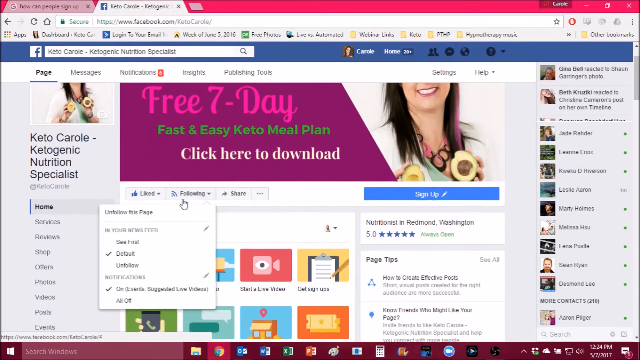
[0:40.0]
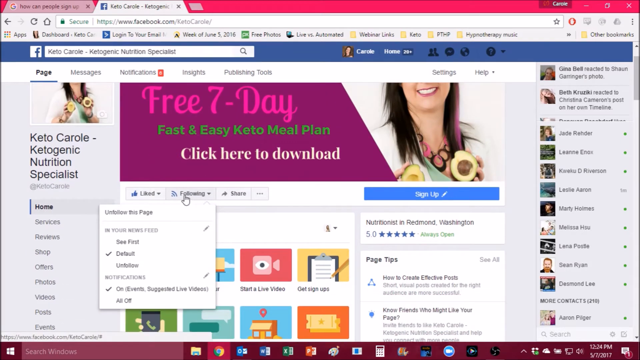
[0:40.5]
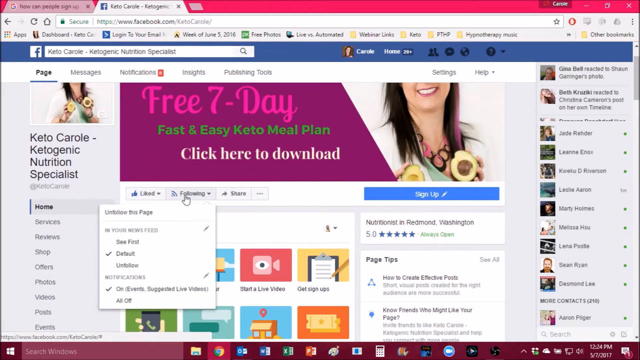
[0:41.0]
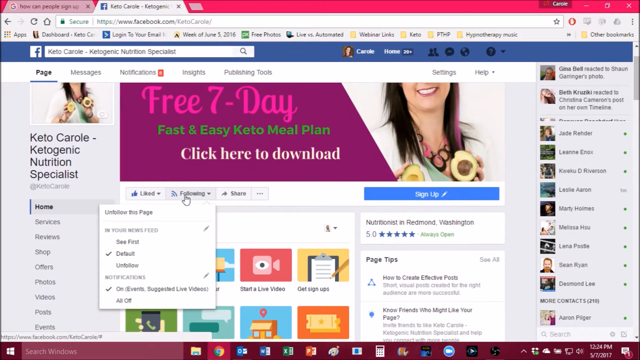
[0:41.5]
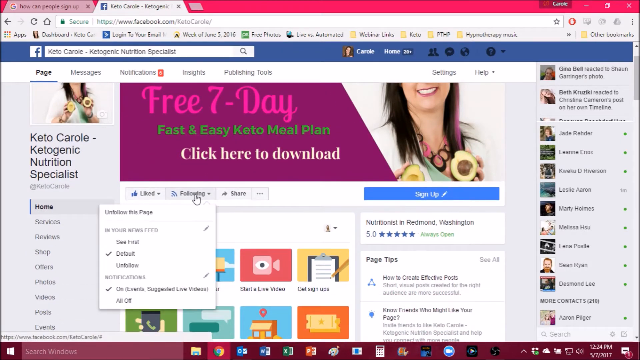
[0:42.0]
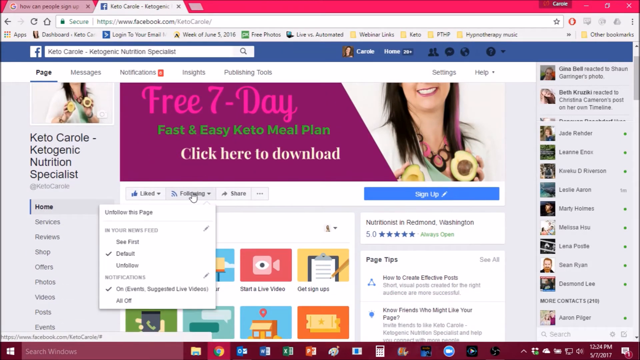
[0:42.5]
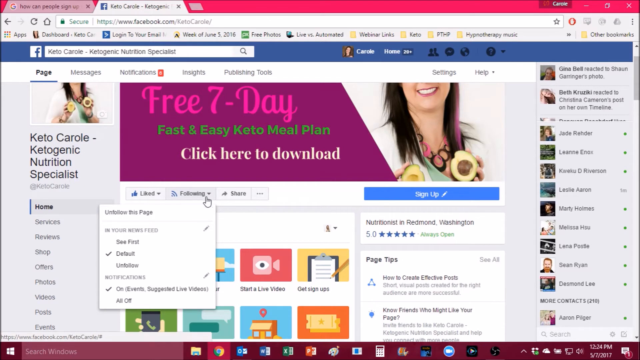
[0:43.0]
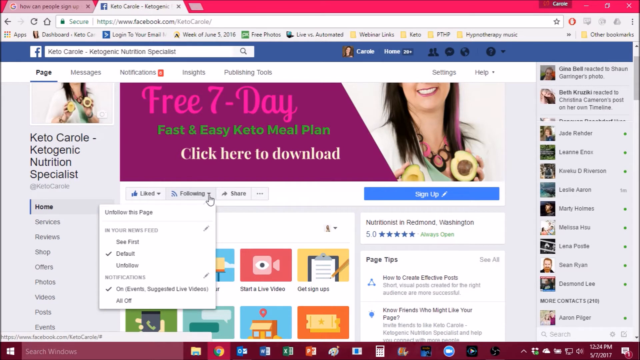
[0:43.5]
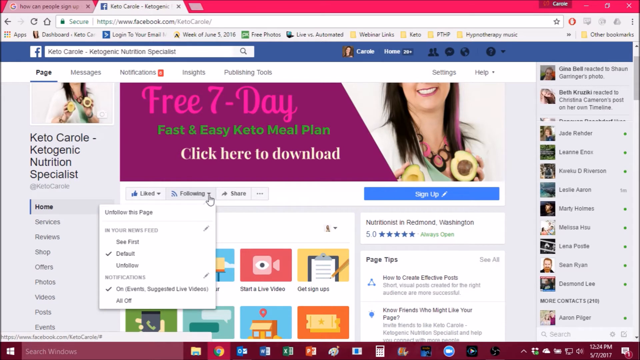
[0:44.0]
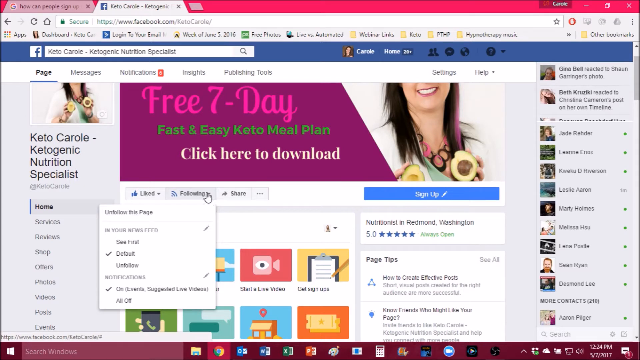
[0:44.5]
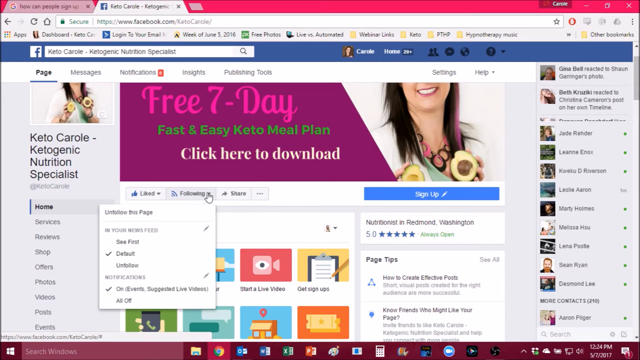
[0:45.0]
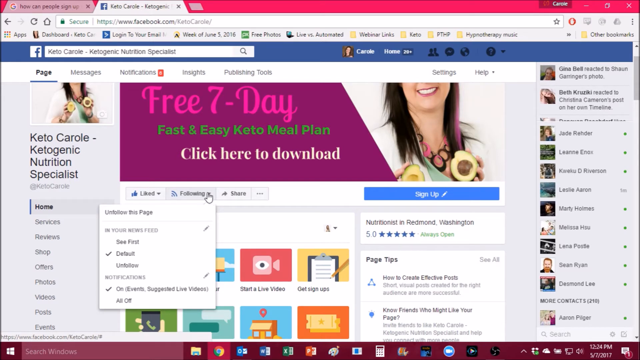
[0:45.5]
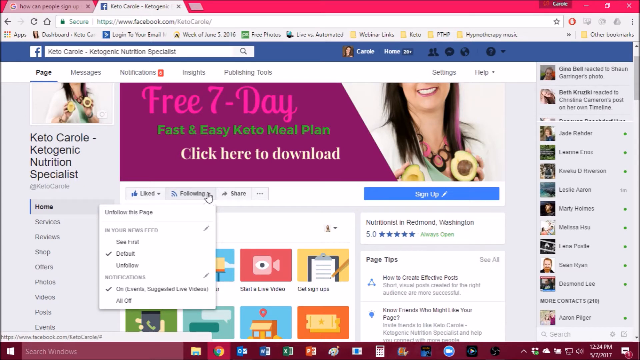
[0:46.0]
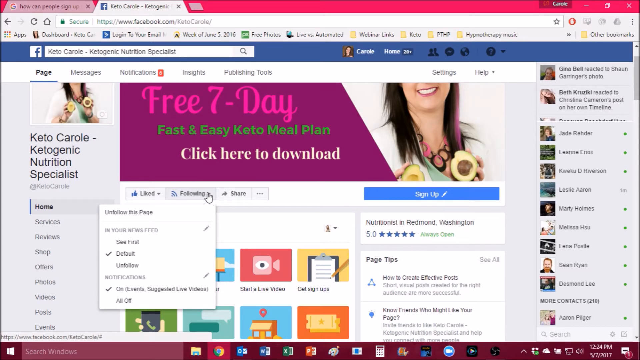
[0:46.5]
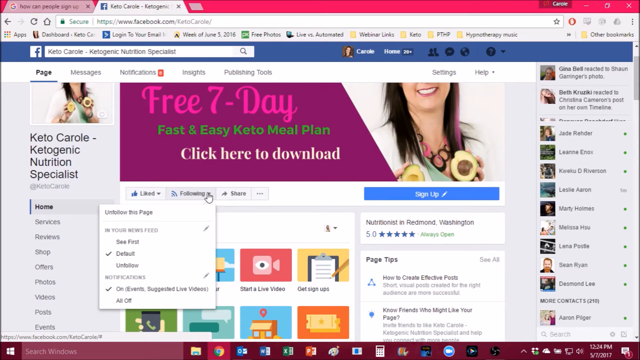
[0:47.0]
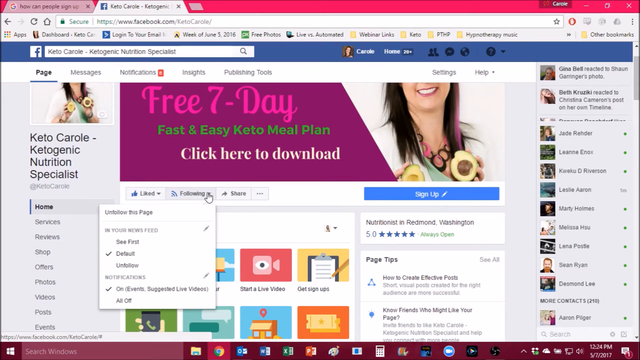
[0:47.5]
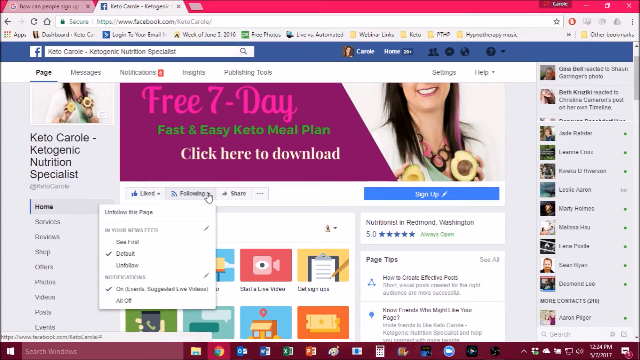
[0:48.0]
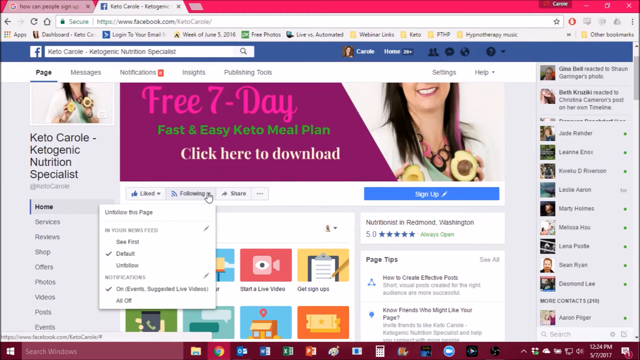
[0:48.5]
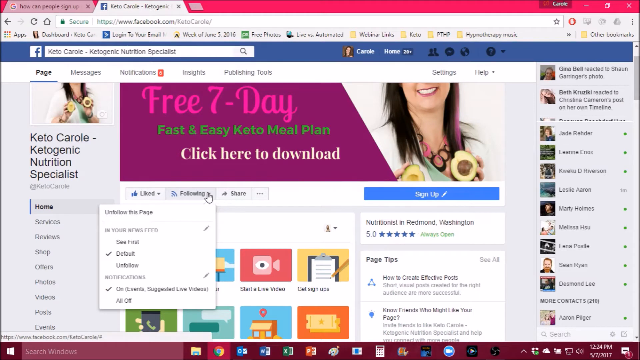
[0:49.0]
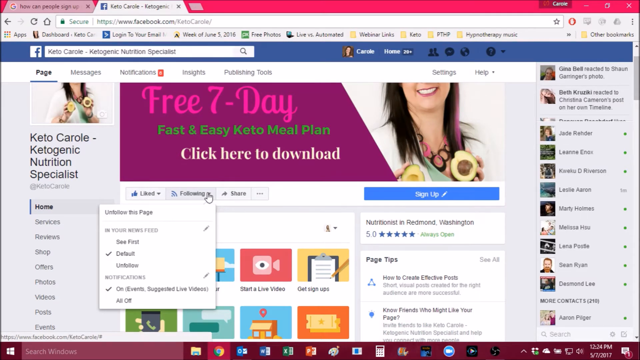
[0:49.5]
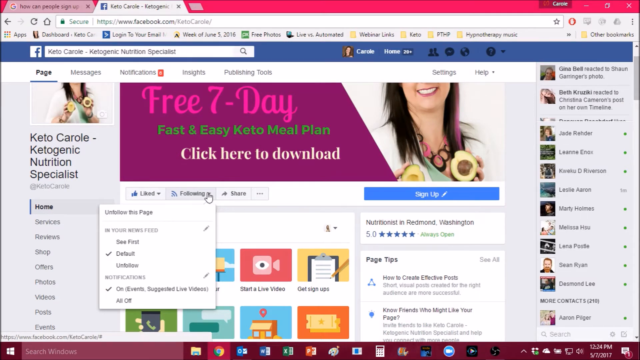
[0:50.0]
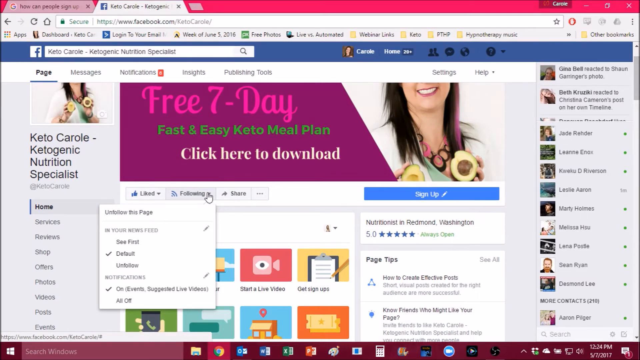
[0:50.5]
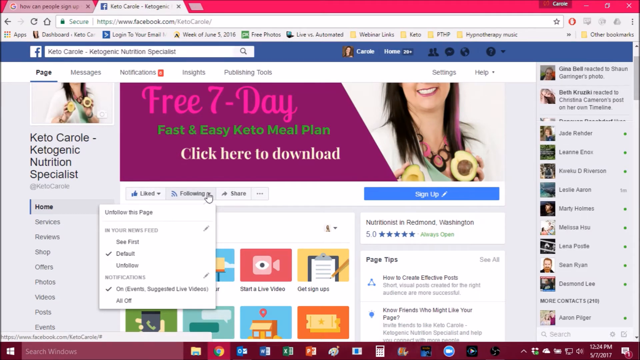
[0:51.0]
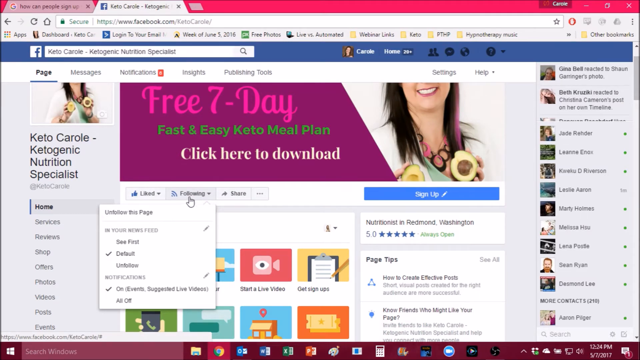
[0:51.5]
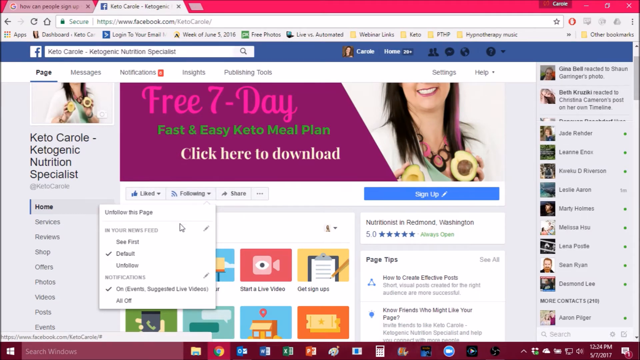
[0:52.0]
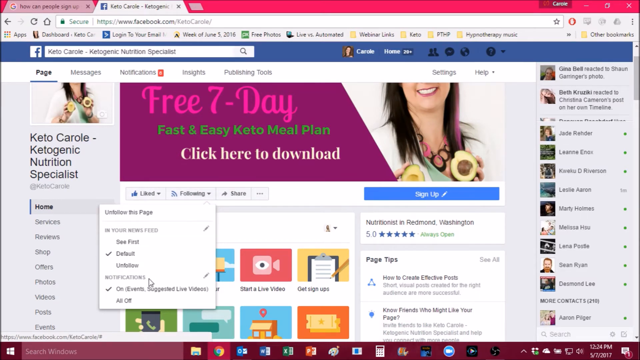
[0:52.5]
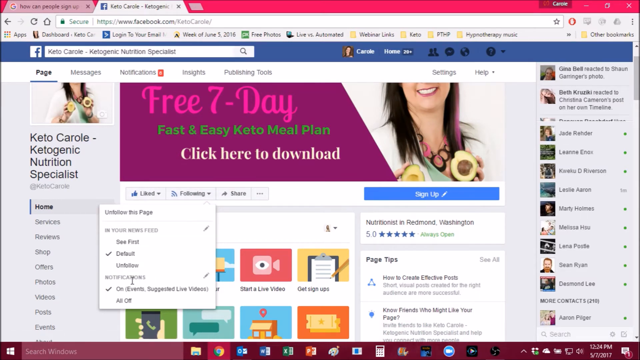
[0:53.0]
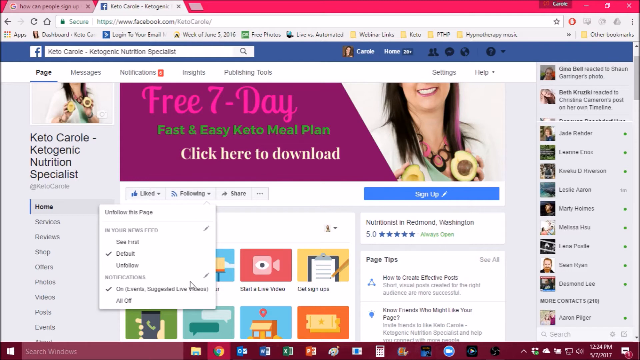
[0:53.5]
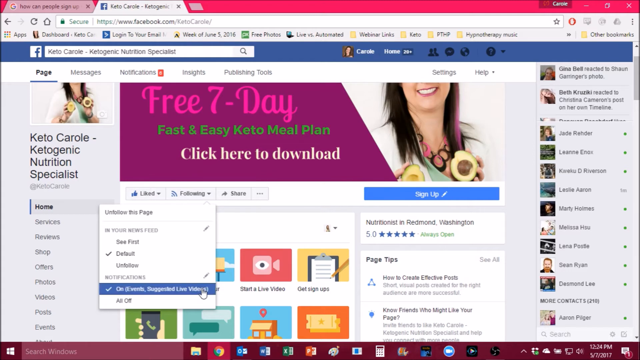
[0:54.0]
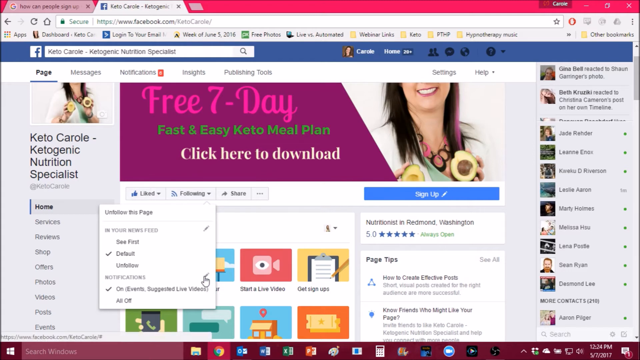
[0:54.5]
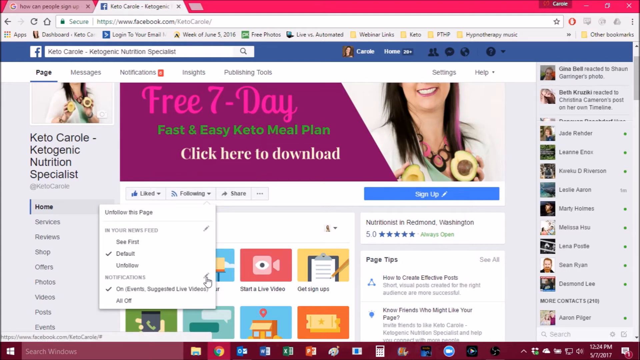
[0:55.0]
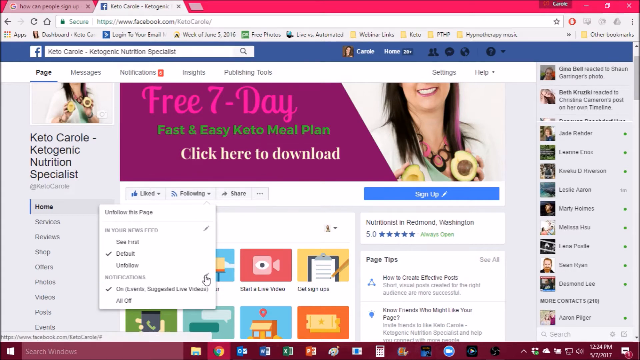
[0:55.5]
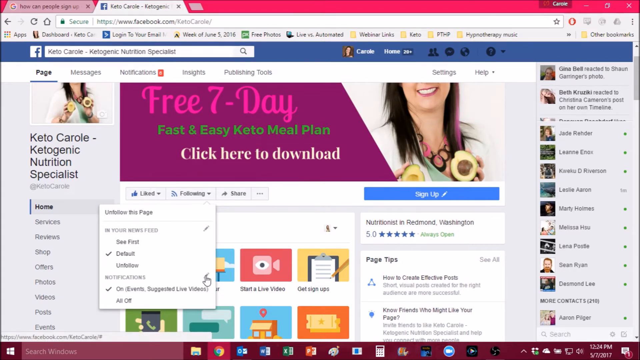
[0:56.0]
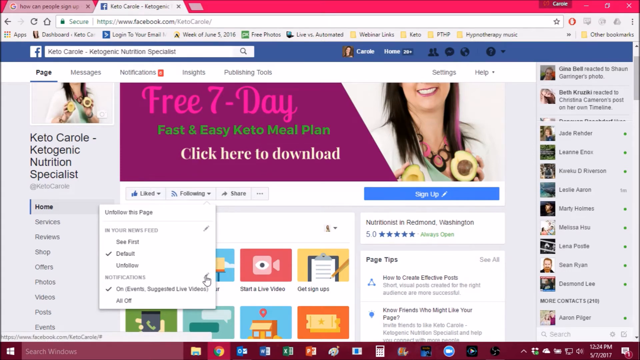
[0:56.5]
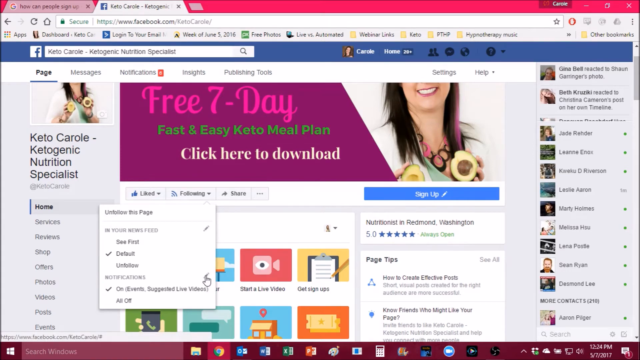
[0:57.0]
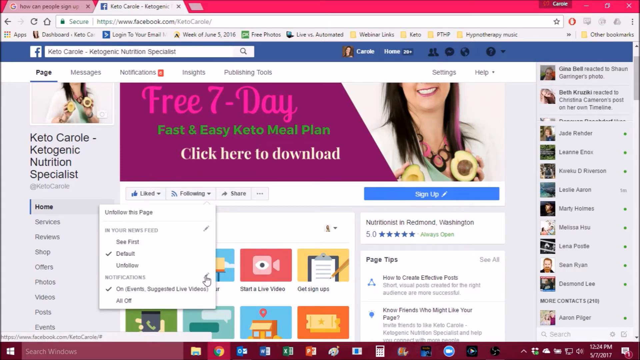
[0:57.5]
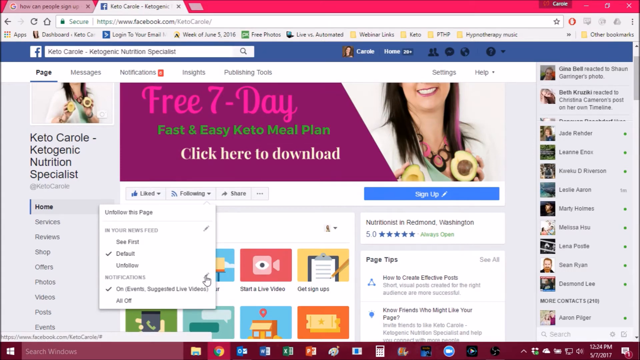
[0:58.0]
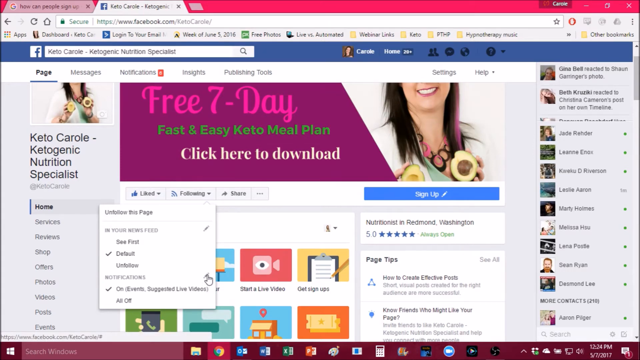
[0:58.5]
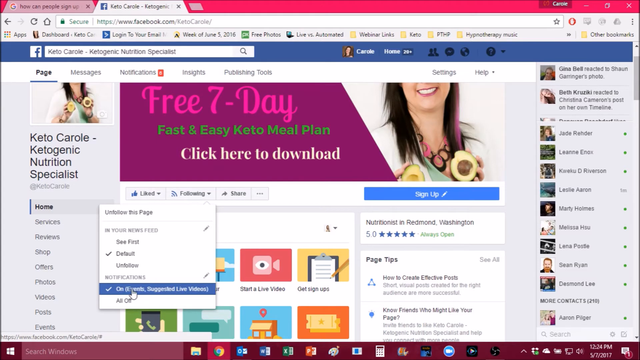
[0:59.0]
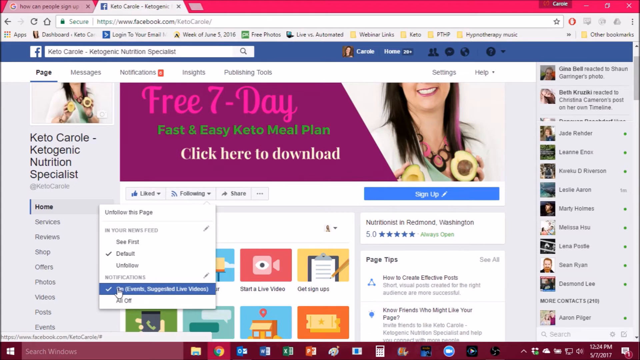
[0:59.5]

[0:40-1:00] The following button under the banner of the Facebook page has been clicked, opening its drop-down menu. The mouse kind of hovers left to right over the following drop-down arrow, closes the menu quickly and reopens it. It seems to linger over the following button for a while, then the cursor moves slowly down the drop-down menu from default to unfollow and hovers over notifications. The mouse highlights the on selection under notifications, then moves to the pencil on the right side of notifications and hovers there for a few seconds. It moves back to highlight the on section under notifications, then quickly moves up to the following button and away from it, closing the drop-down menu, and then highlights the following button again and reopens the same drop-down menu.